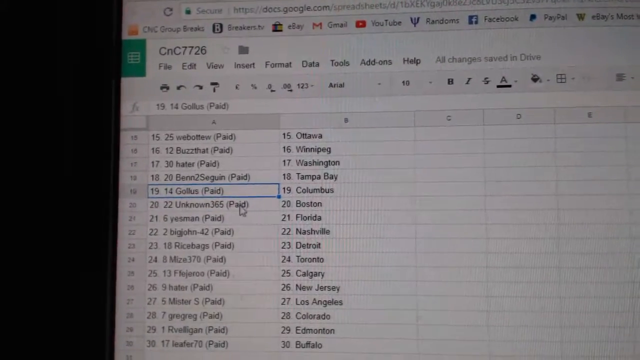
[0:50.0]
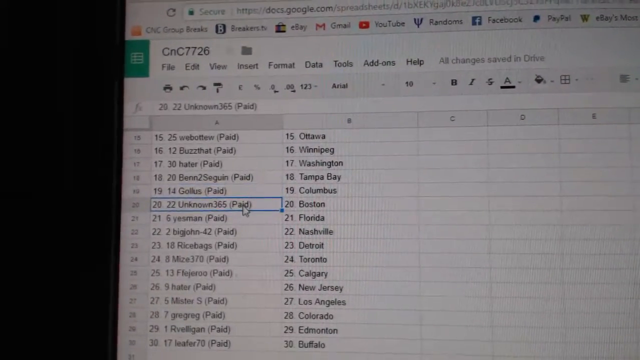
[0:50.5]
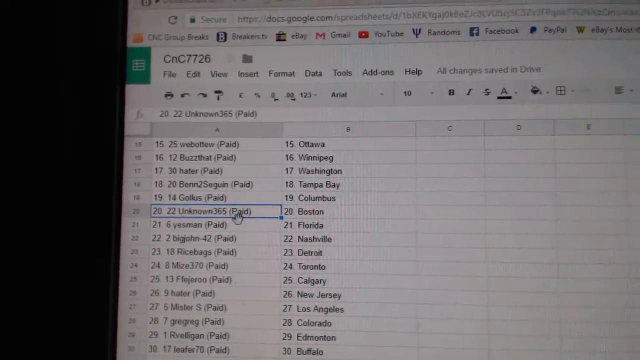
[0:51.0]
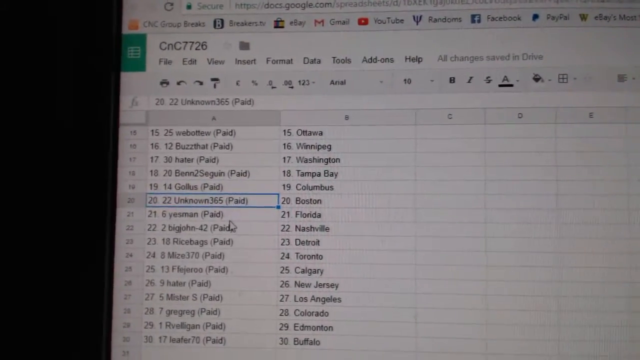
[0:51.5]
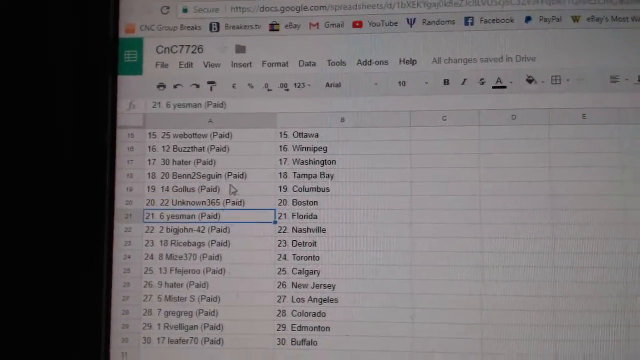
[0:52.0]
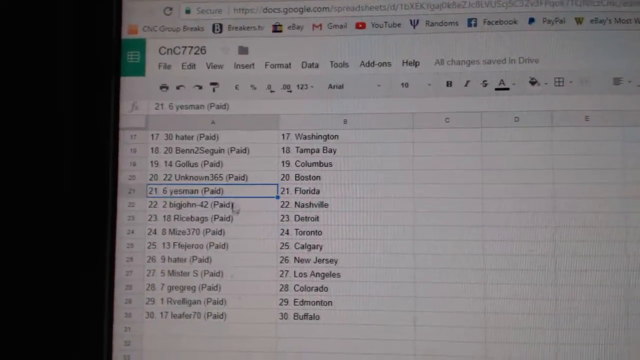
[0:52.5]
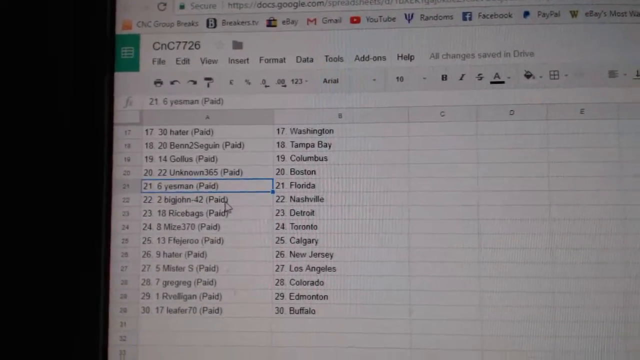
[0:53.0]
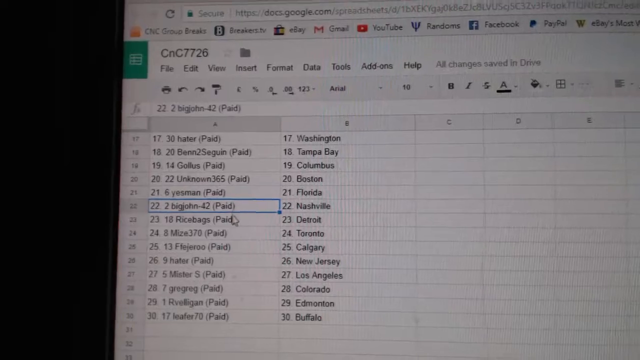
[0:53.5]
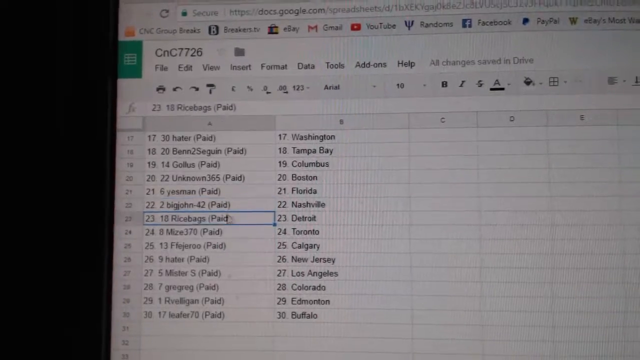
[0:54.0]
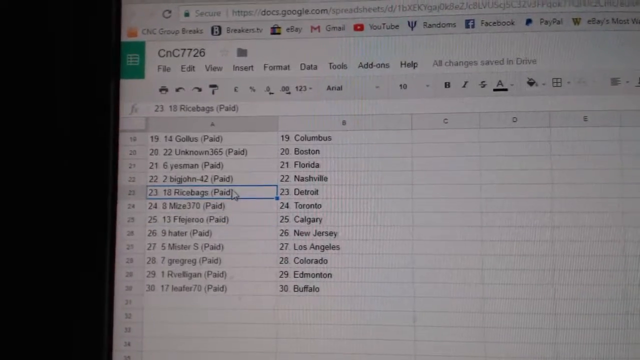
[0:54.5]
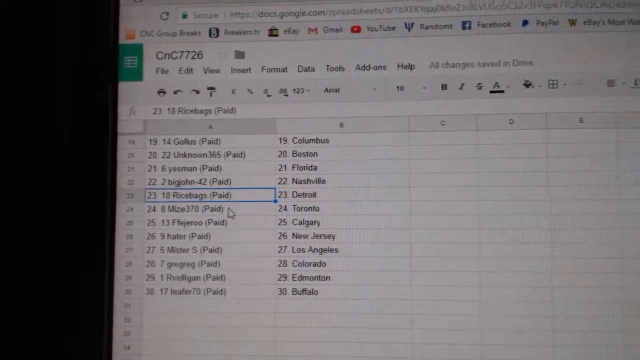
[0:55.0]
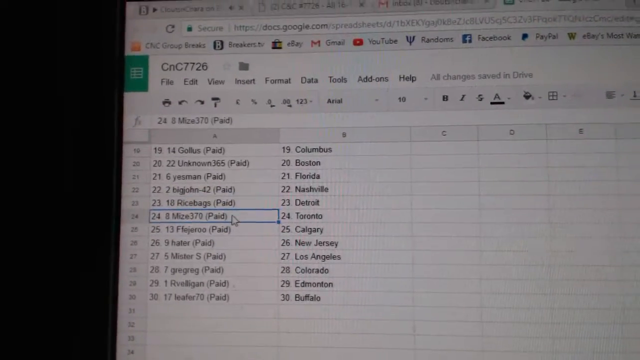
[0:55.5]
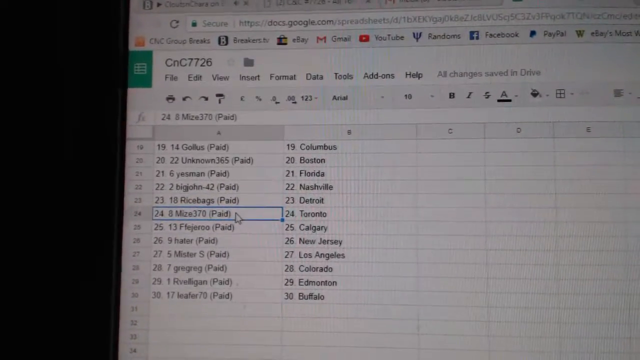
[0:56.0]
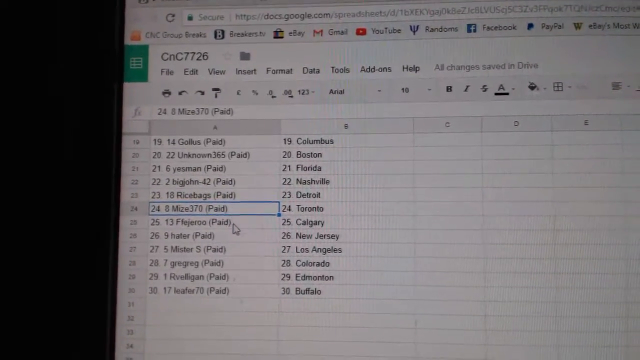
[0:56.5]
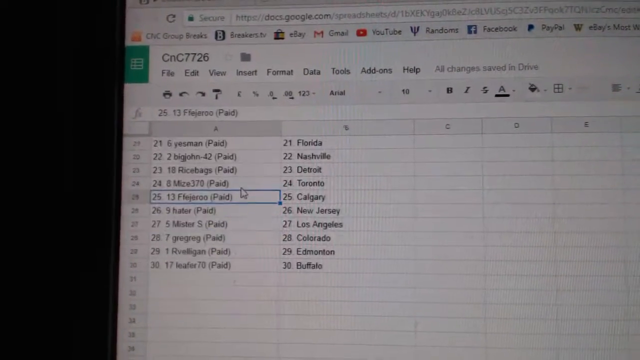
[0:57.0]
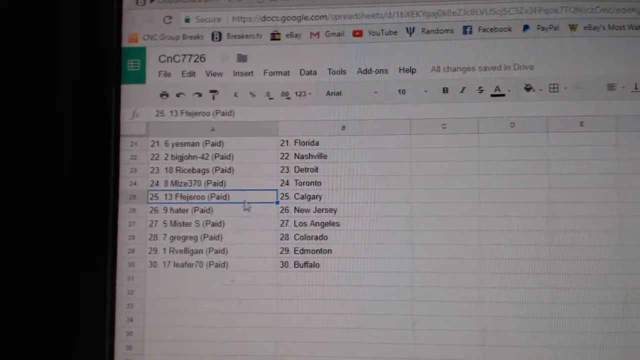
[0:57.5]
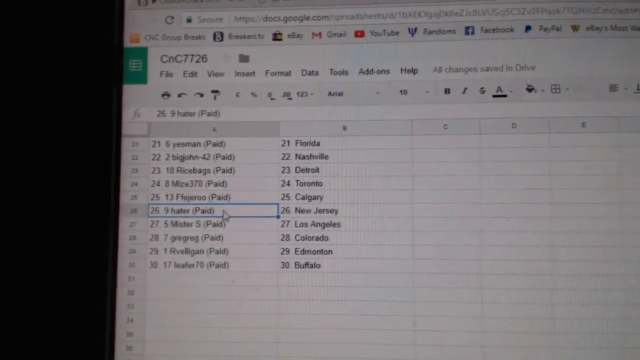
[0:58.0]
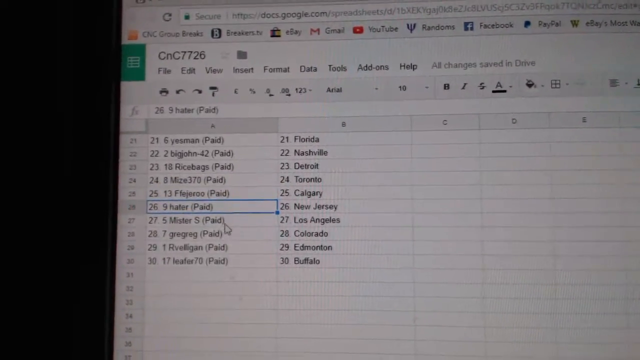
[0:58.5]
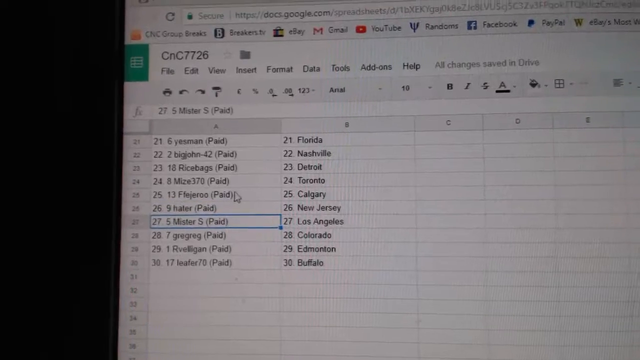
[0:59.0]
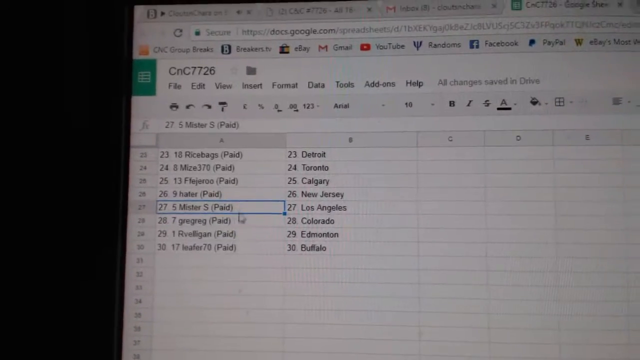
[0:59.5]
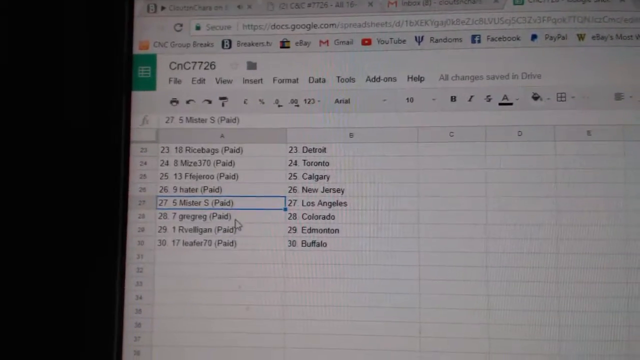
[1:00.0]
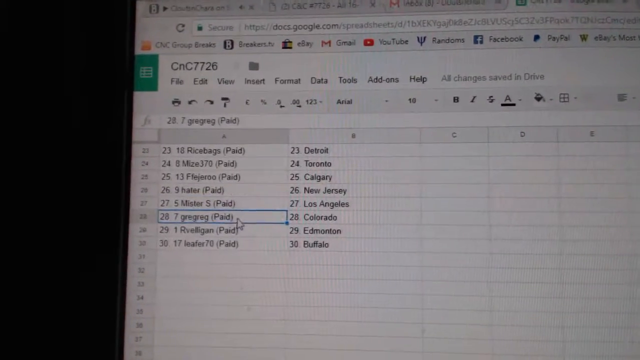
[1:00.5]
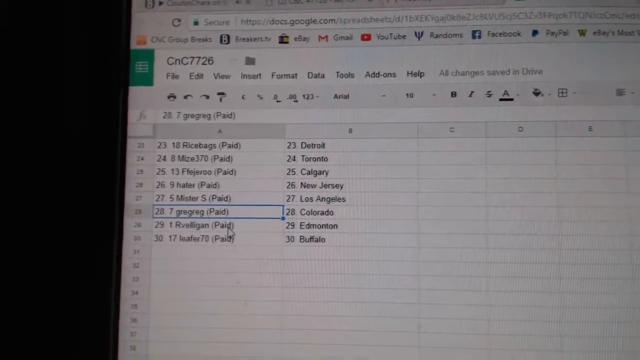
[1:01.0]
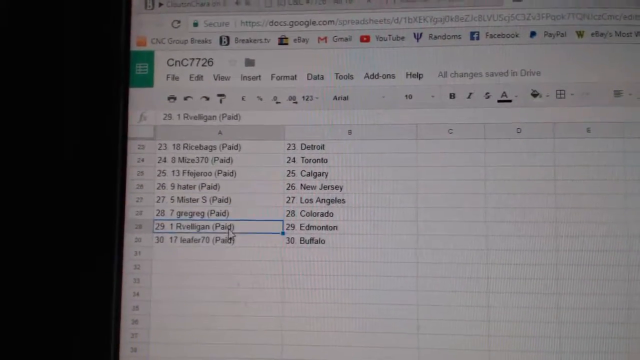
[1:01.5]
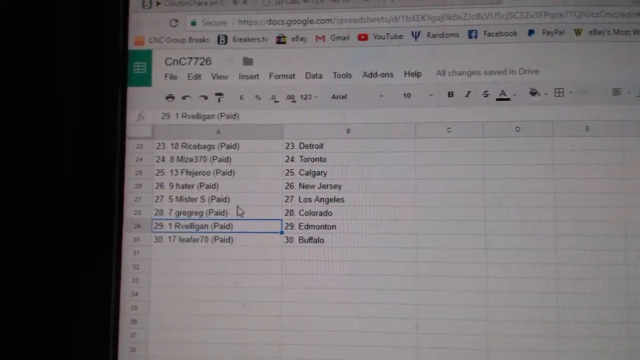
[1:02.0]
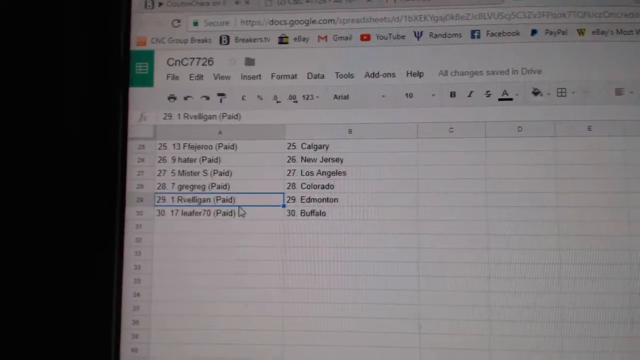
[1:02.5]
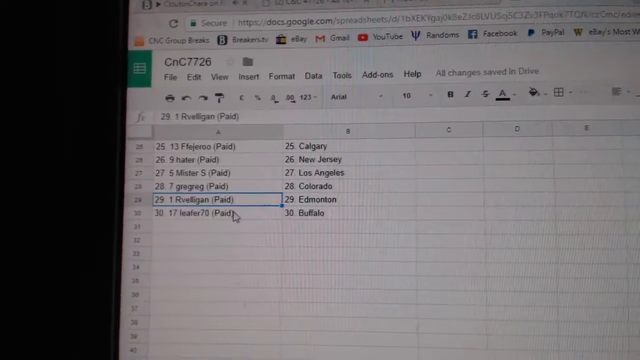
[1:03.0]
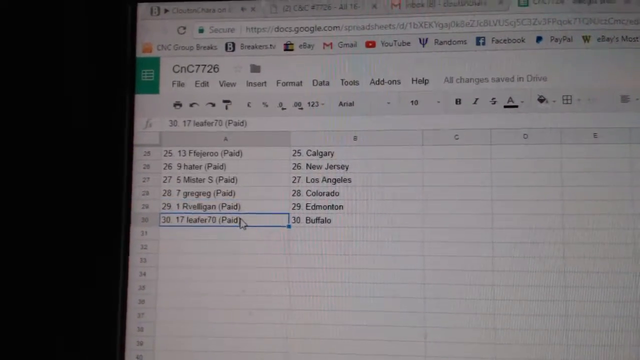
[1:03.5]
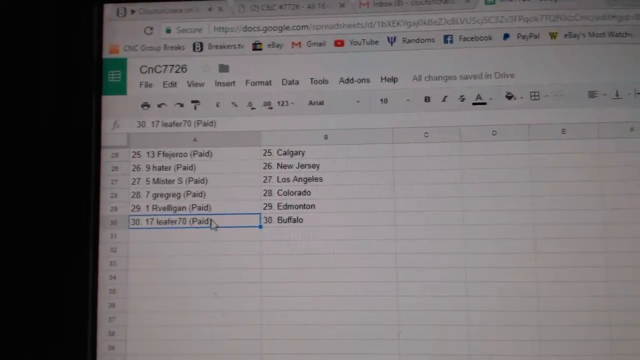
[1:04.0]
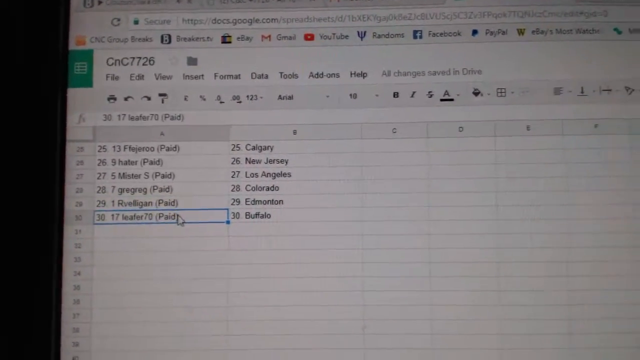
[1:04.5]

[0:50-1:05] A close-up of a spreadsheet application is filmed from a camera rather than recorded directly from the computer. The filename is CnC7726, and based on the URL, the program is Google Docs. Two columns are filled in: column A has a number of usernames or similar, each followed by the word paid in brackets, and column B mostly has names of cities, primarily in Canada and the United States. The person clicks through each of the usernames in column A until reaching the final name, and the video ends.